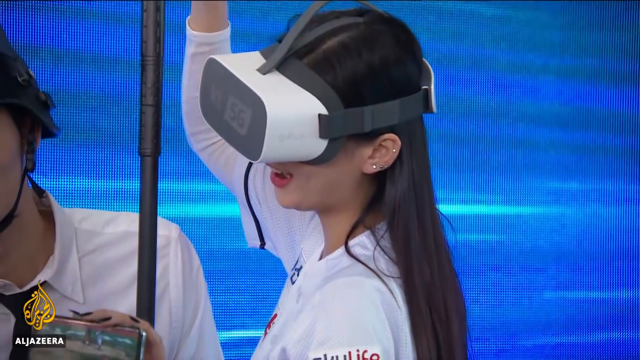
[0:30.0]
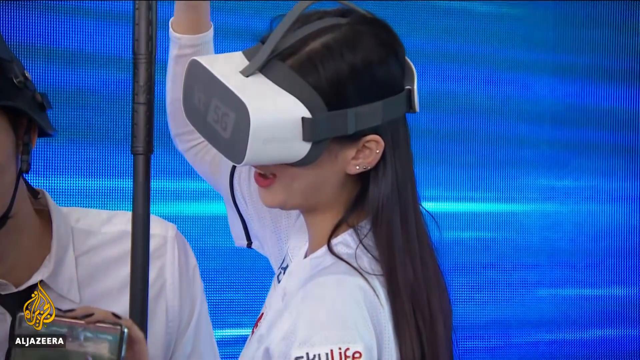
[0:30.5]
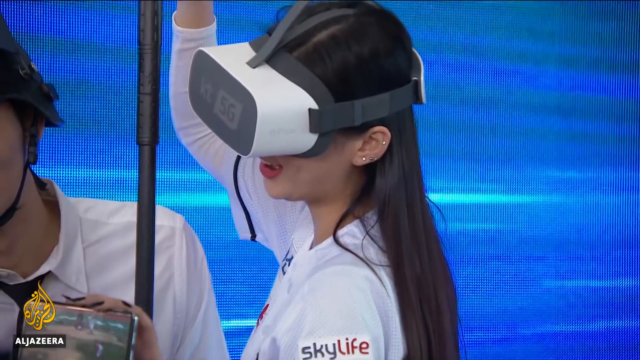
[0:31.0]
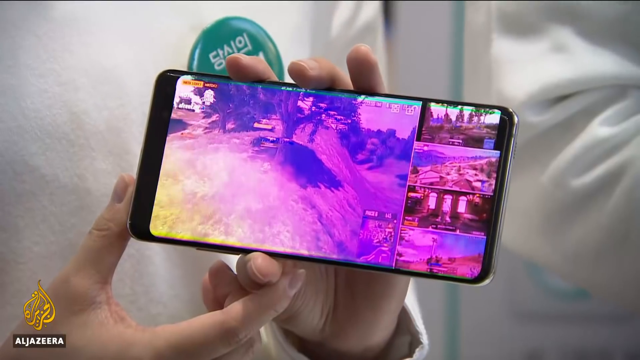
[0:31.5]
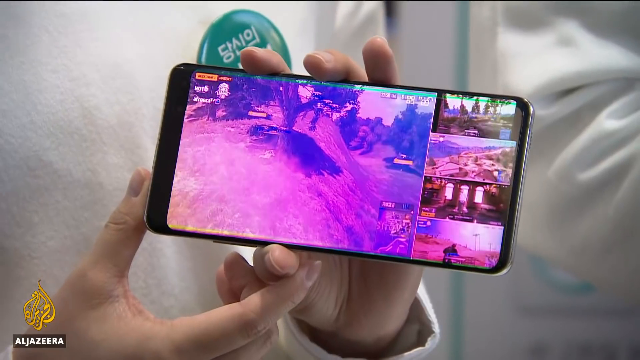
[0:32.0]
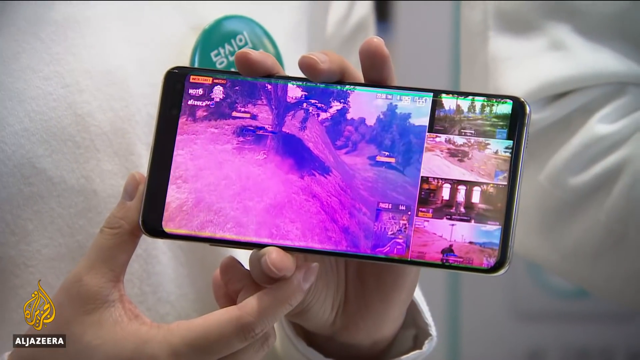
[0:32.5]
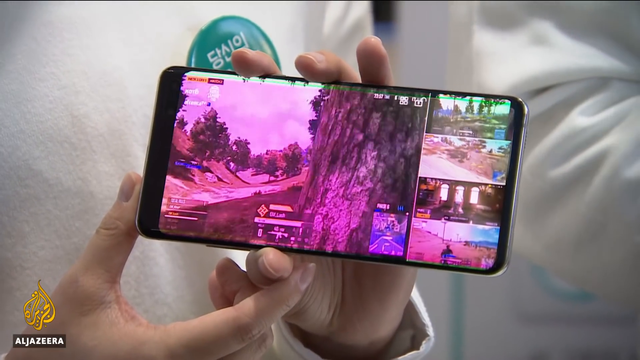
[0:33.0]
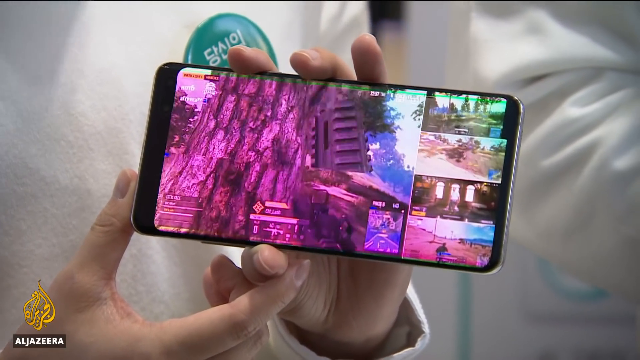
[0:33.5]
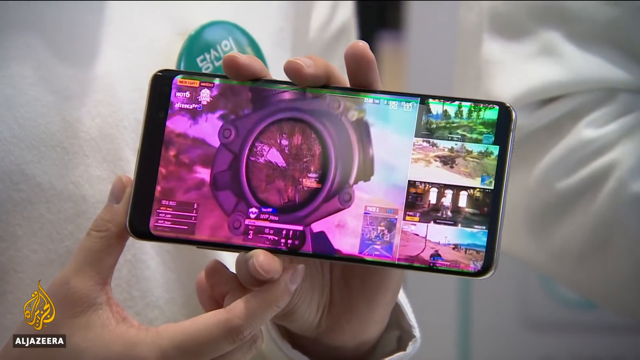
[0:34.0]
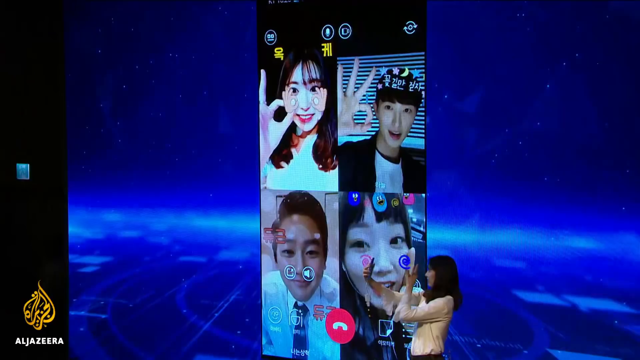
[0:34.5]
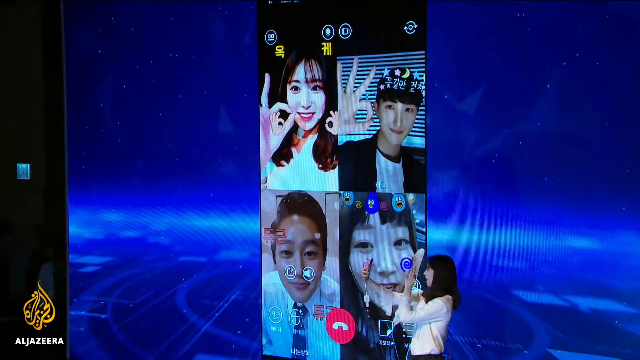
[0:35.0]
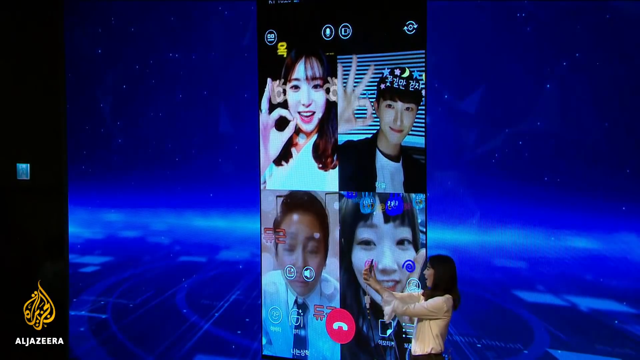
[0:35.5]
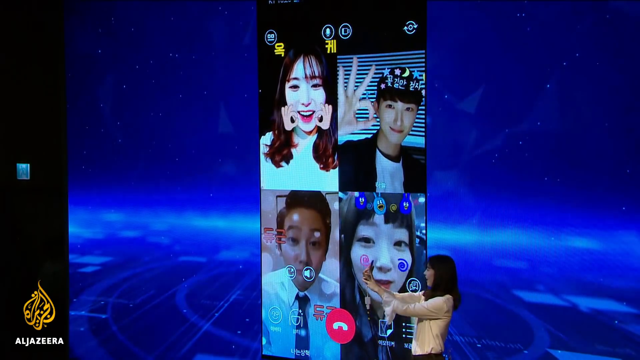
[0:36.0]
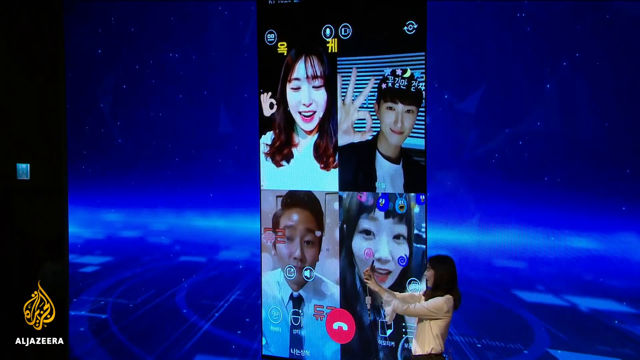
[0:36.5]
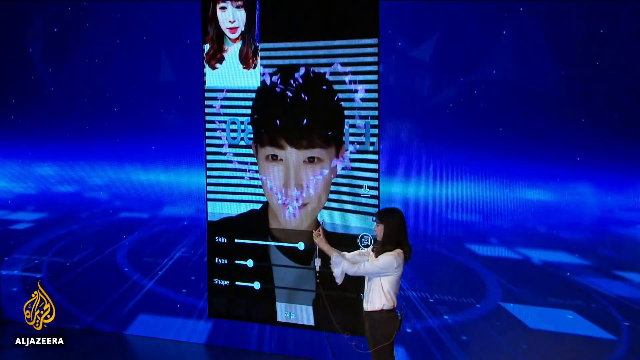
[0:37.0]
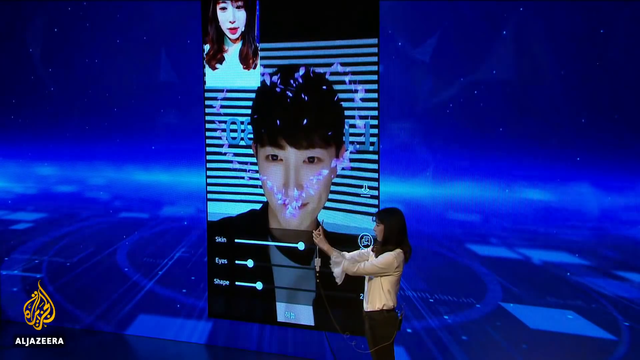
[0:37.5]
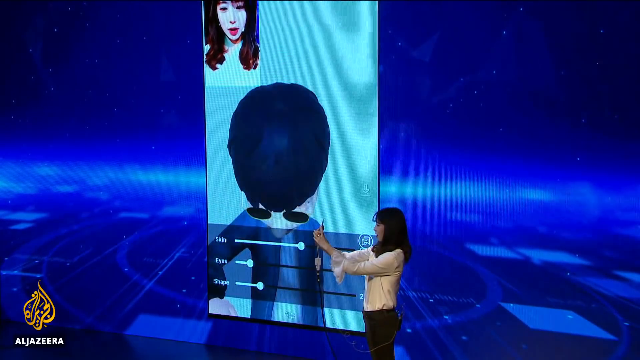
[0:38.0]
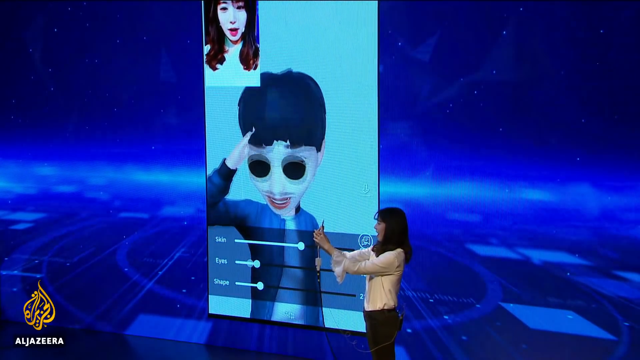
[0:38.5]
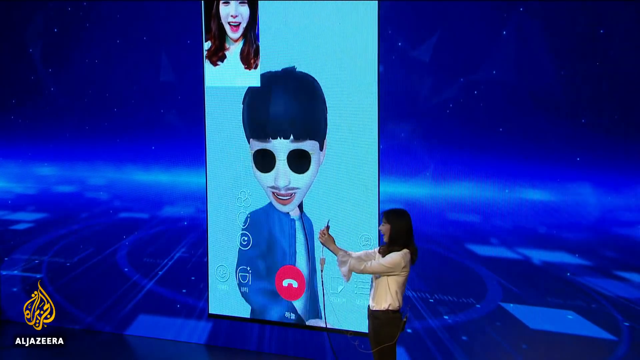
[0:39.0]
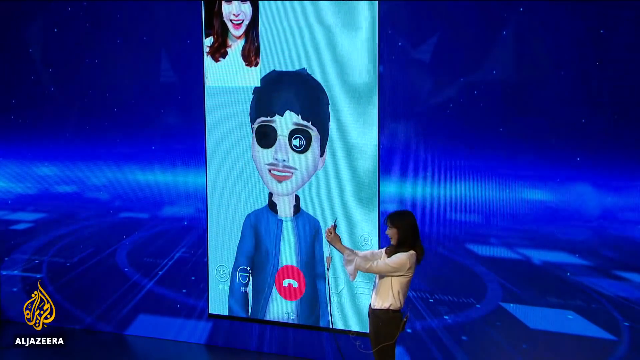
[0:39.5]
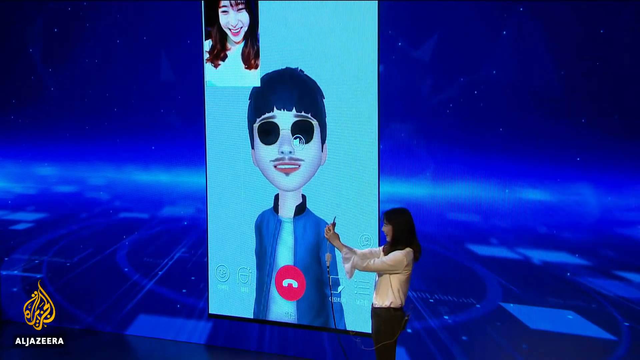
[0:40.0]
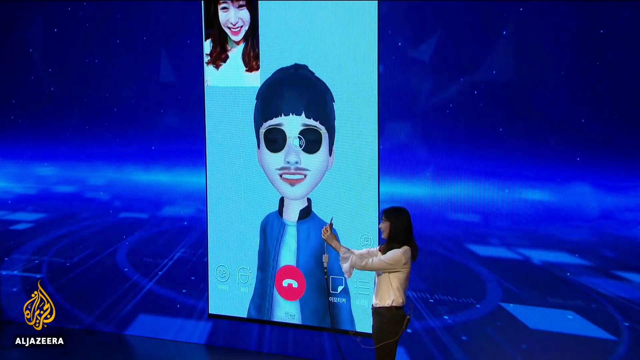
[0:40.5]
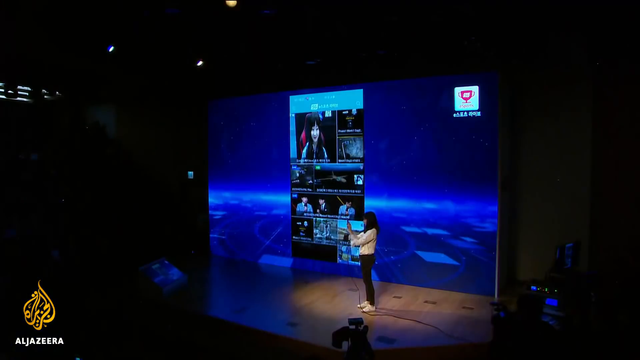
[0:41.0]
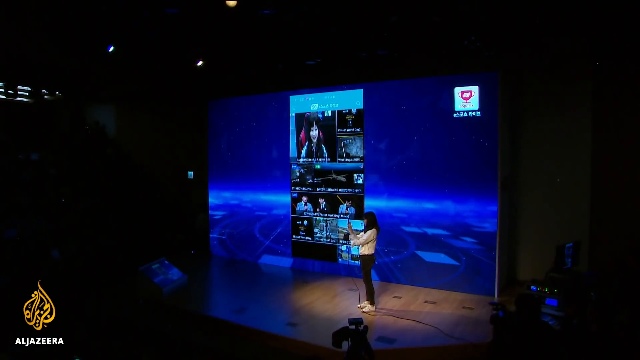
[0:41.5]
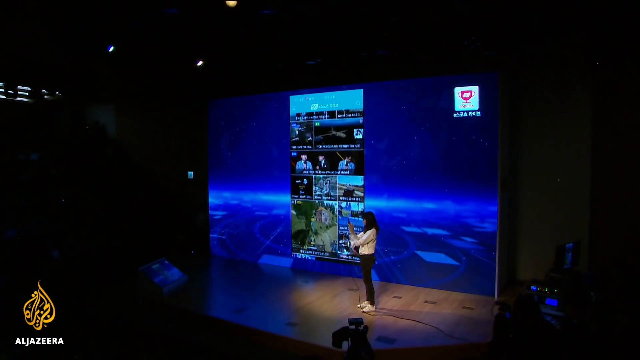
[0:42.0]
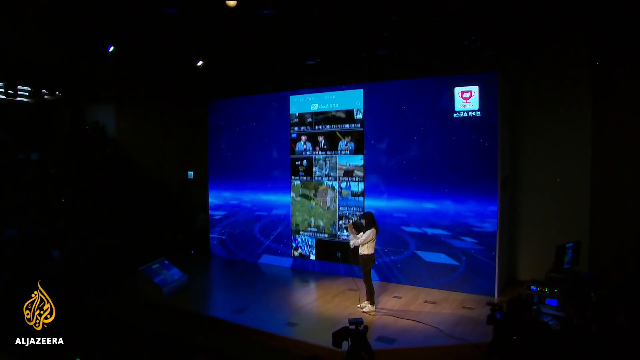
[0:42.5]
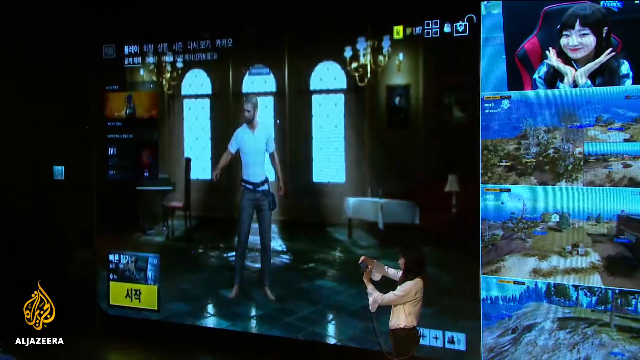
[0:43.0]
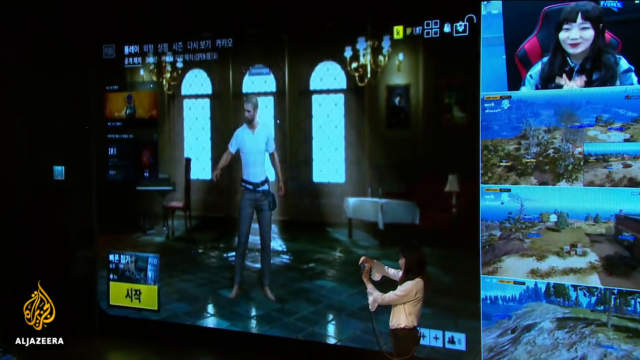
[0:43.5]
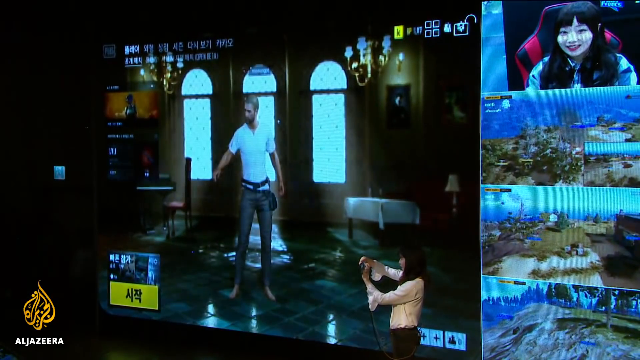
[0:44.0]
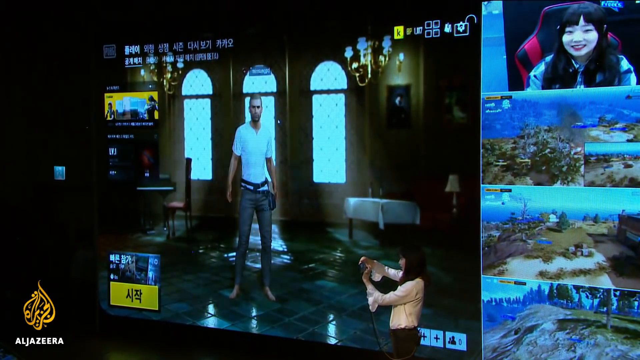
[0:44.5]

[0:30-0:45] A close-up shows a cell phone held in someone's hand with a video game on the screen. The camera then jumps out to show a large video screen behind the stage of the launch presentation. In front of the stage stands an Asian woman with long black hair in a yellow long-sleeved shirt. Behind her, on the screen, is a collage of four faces of young Asian people, two female and possibly two male, all smiling and looking into the camera. The view zooms into one of the faces, which morphs into an animated avatar as the woman points to the screen and describes how to play the virtual reality game people were seen playing earlier. The camera pulls back to show her standing in front of the stage as the app interface for the game shows different aspects of the game, including one she selects that shows a handyman standing in a house.